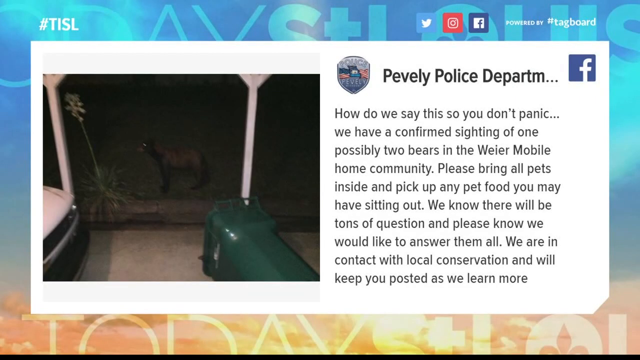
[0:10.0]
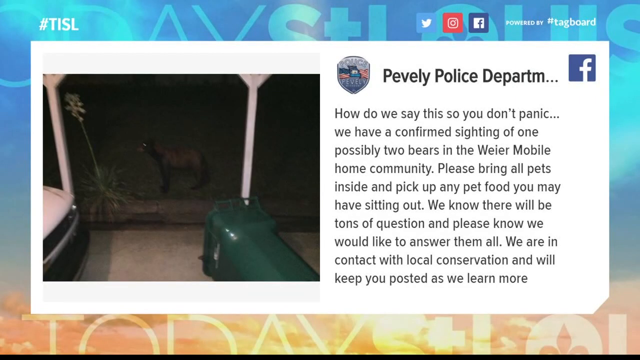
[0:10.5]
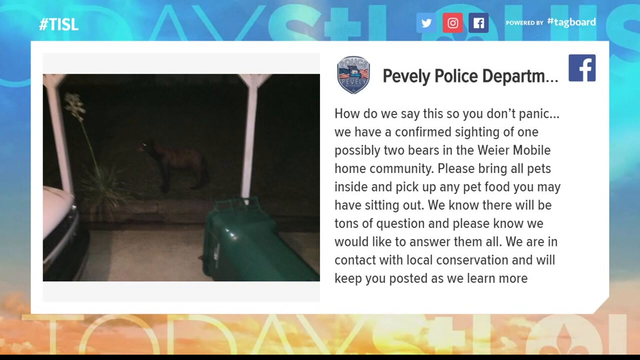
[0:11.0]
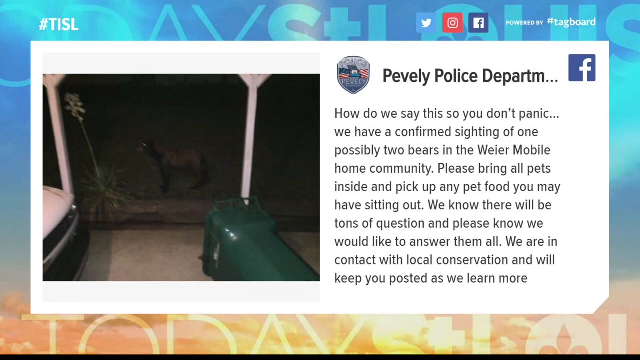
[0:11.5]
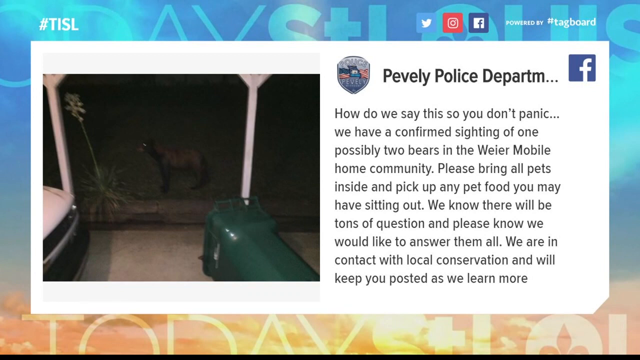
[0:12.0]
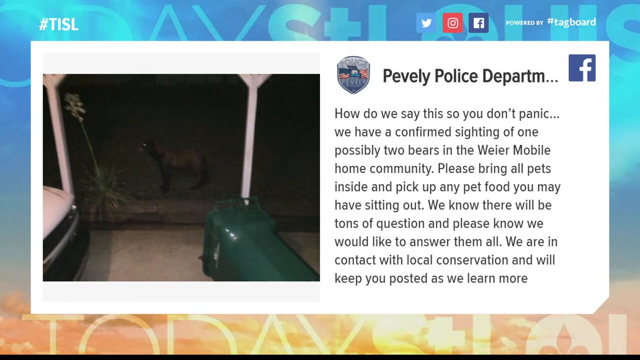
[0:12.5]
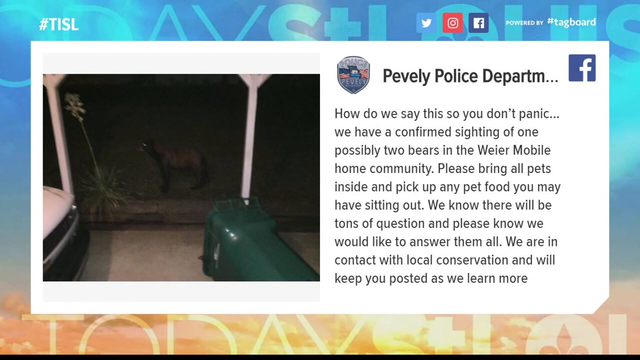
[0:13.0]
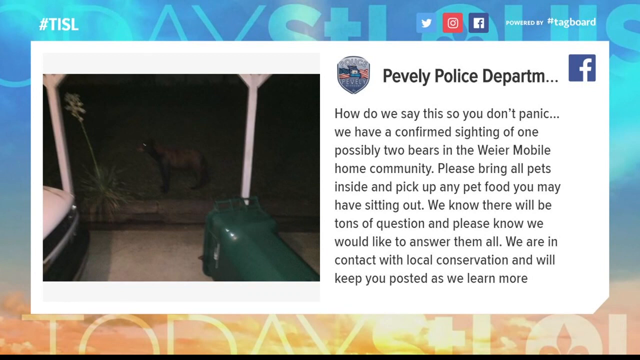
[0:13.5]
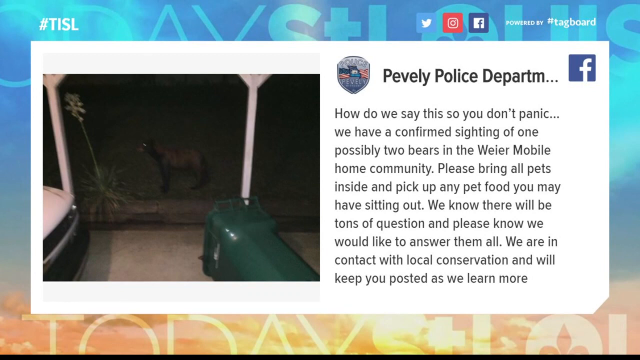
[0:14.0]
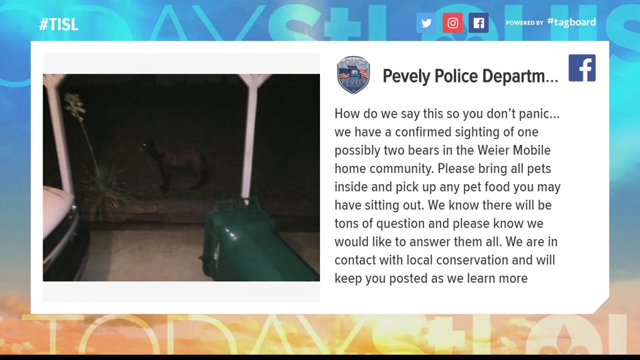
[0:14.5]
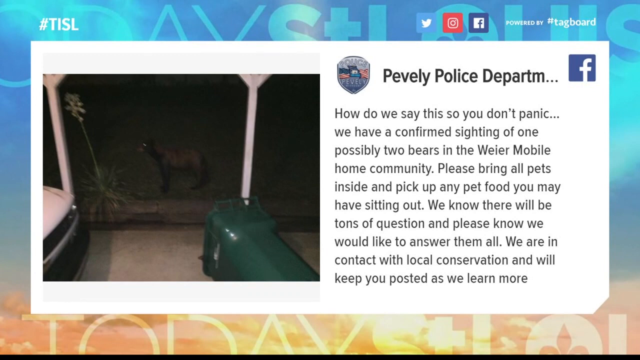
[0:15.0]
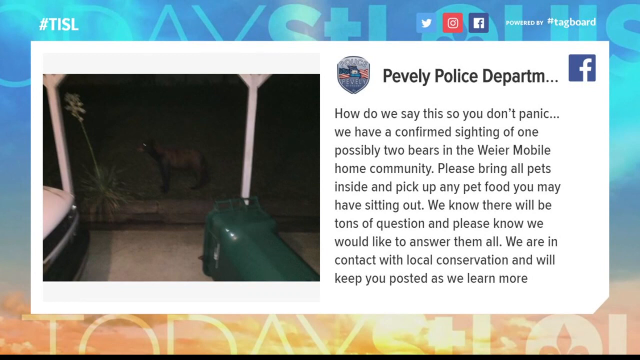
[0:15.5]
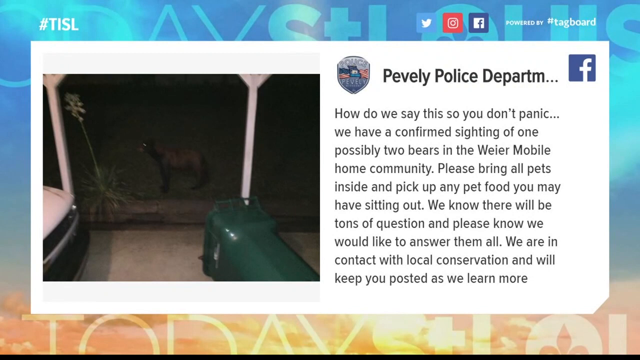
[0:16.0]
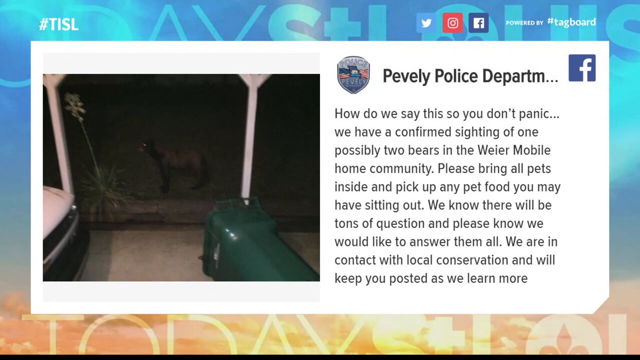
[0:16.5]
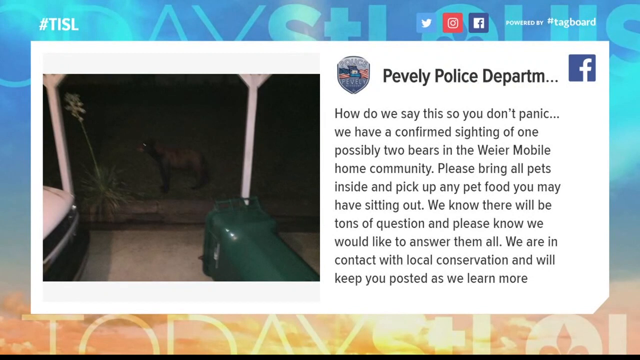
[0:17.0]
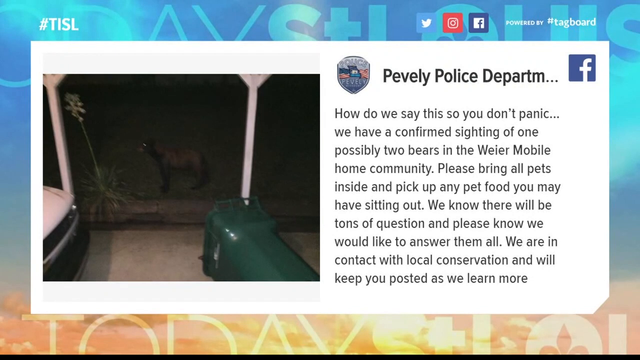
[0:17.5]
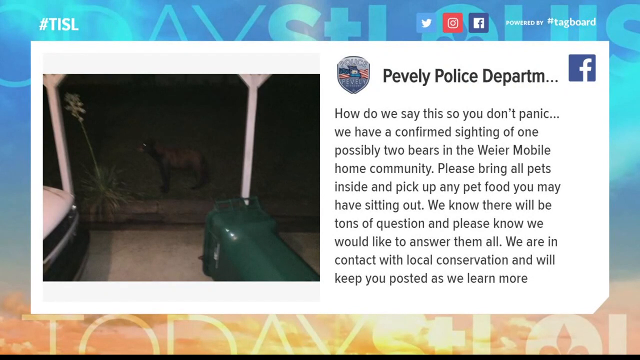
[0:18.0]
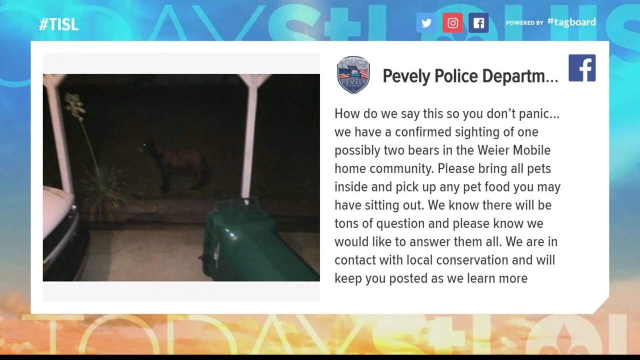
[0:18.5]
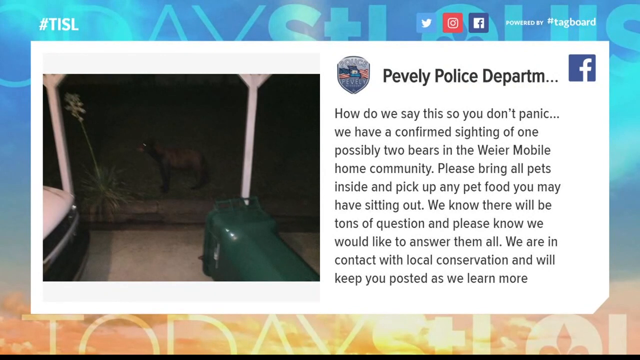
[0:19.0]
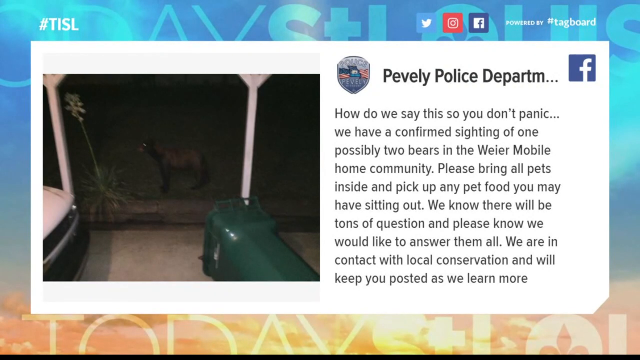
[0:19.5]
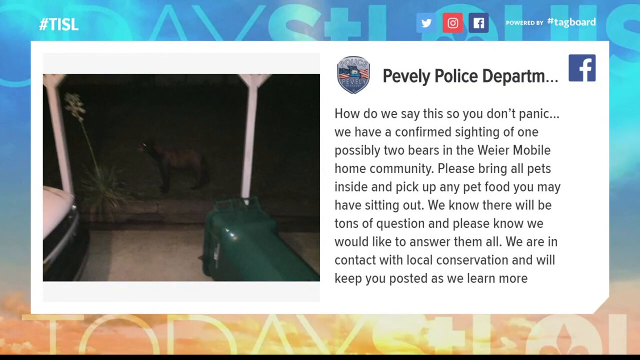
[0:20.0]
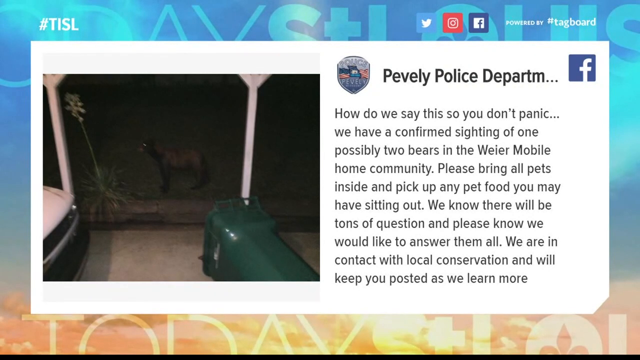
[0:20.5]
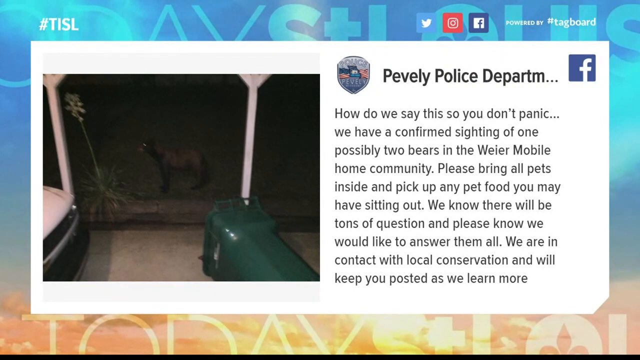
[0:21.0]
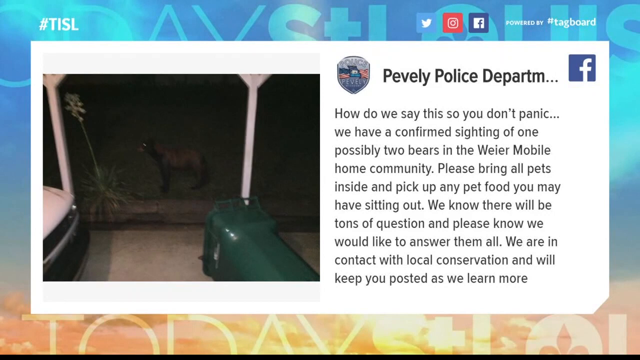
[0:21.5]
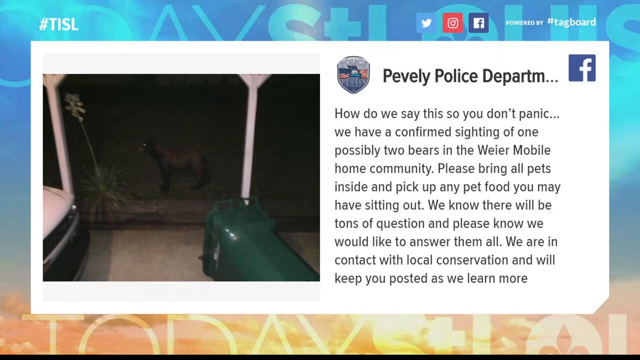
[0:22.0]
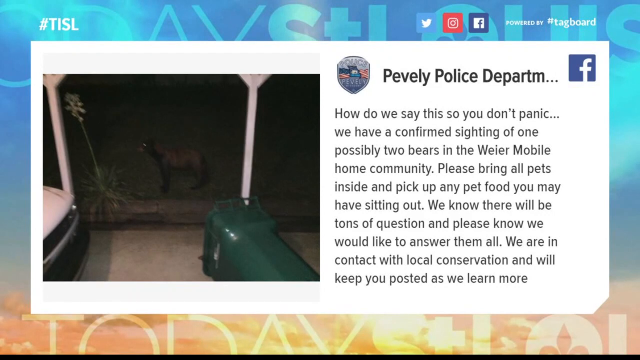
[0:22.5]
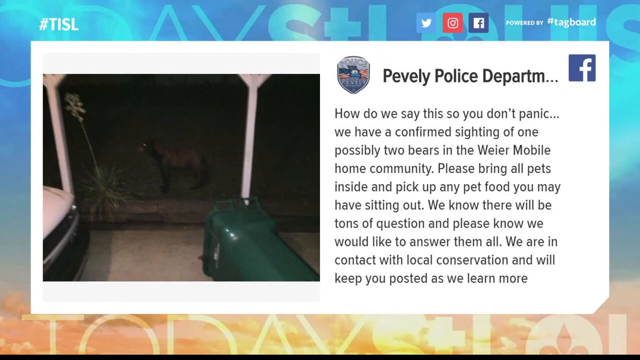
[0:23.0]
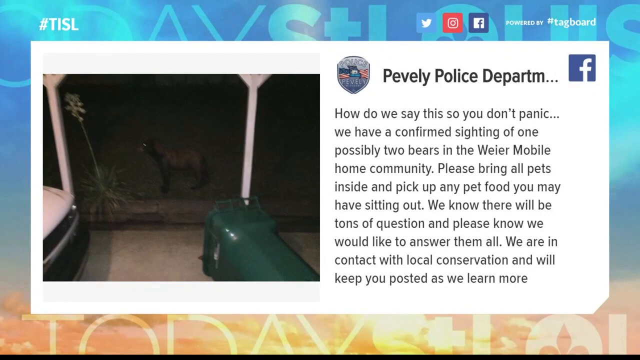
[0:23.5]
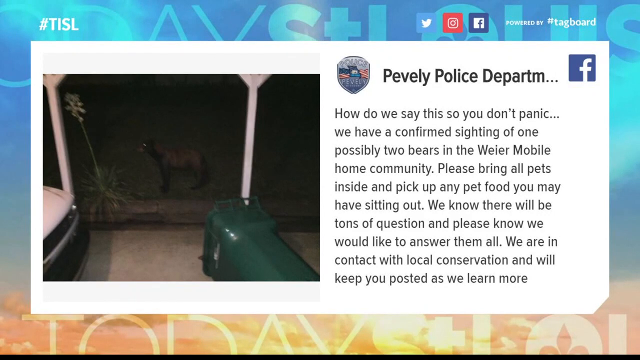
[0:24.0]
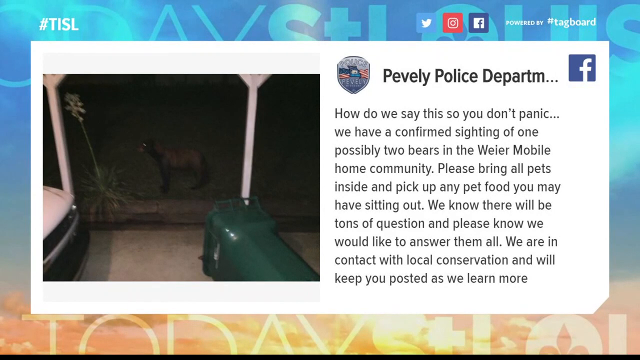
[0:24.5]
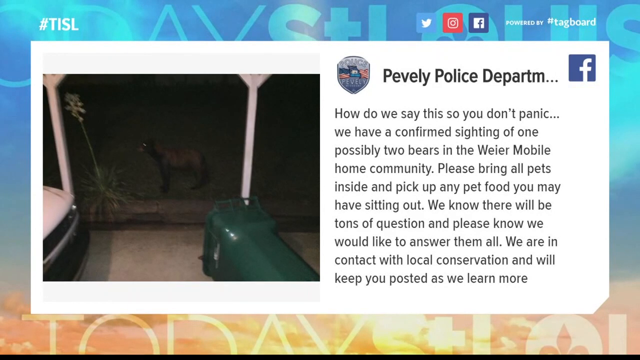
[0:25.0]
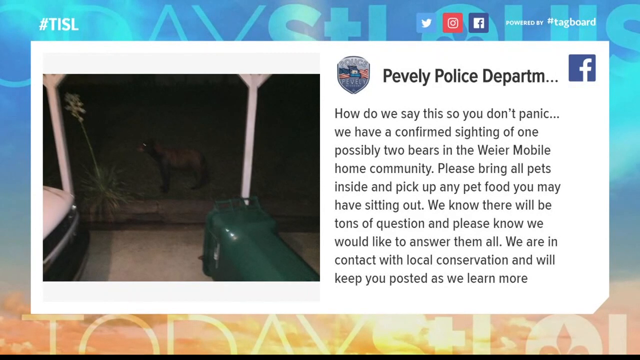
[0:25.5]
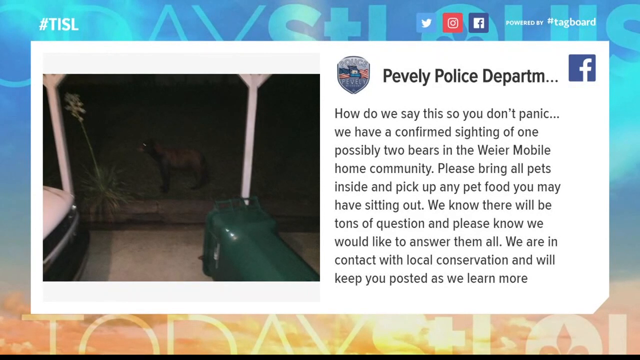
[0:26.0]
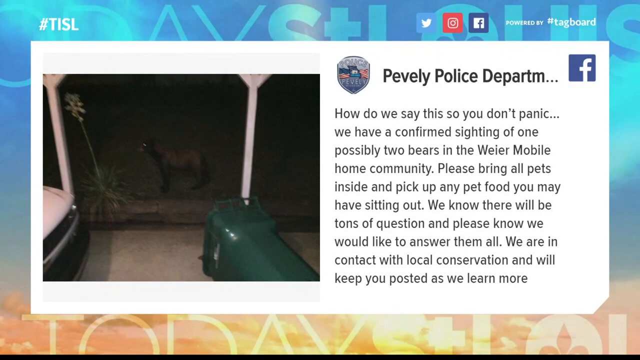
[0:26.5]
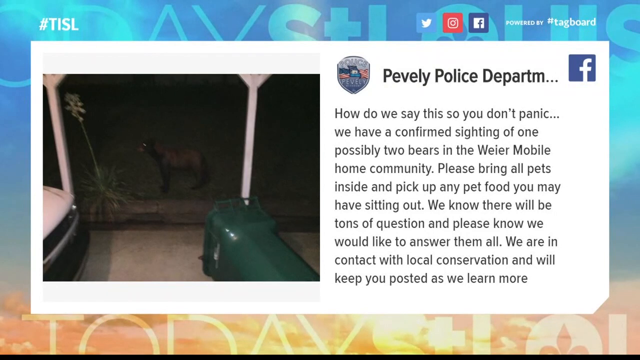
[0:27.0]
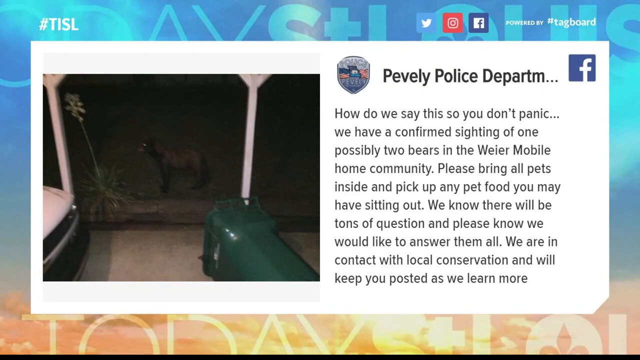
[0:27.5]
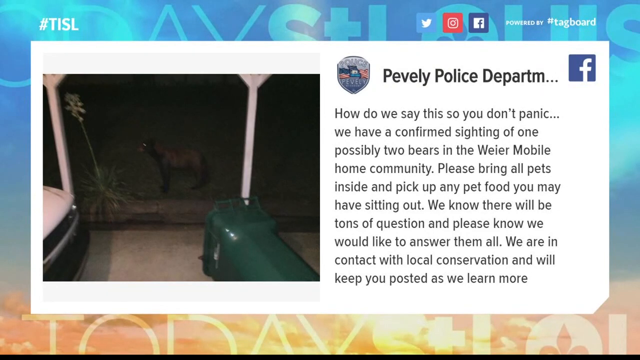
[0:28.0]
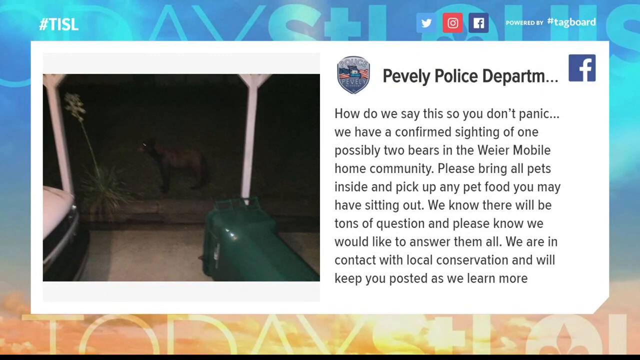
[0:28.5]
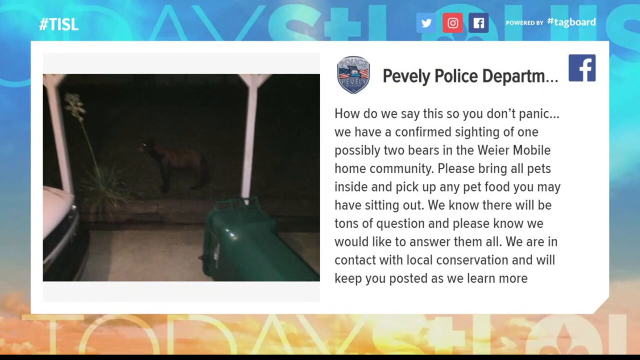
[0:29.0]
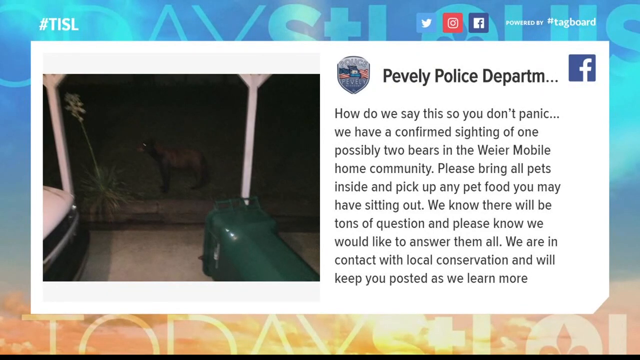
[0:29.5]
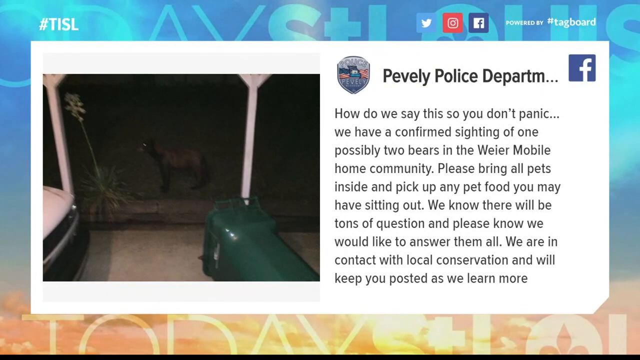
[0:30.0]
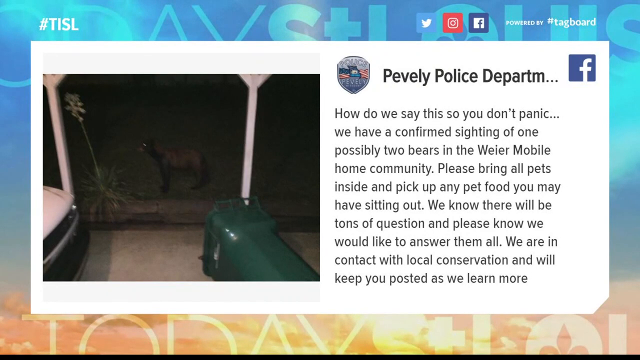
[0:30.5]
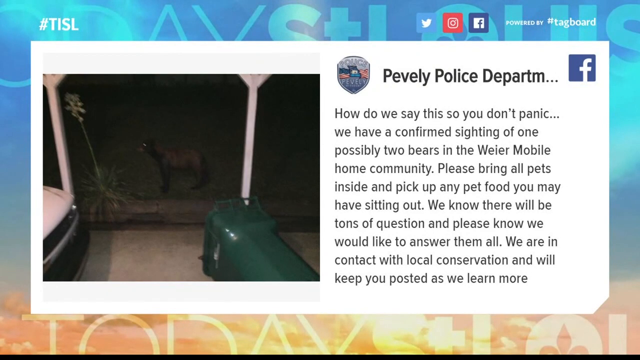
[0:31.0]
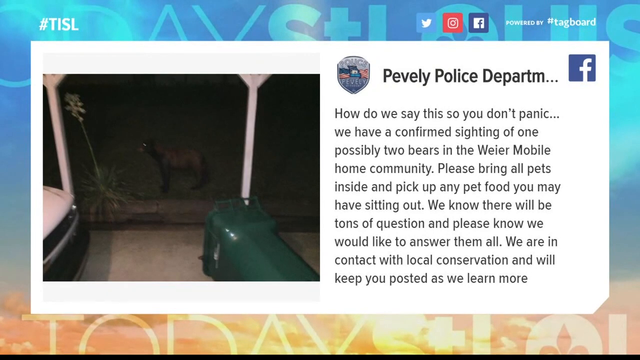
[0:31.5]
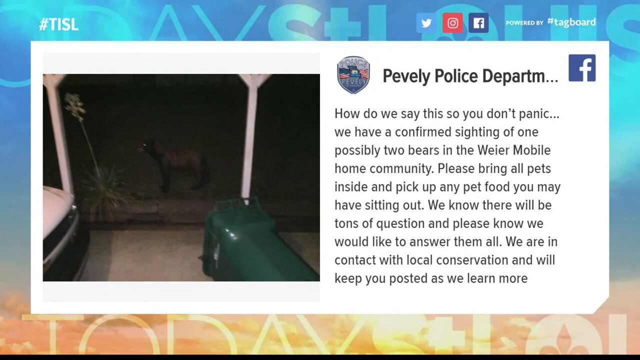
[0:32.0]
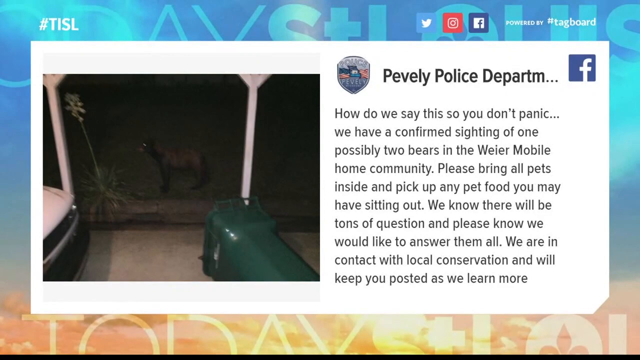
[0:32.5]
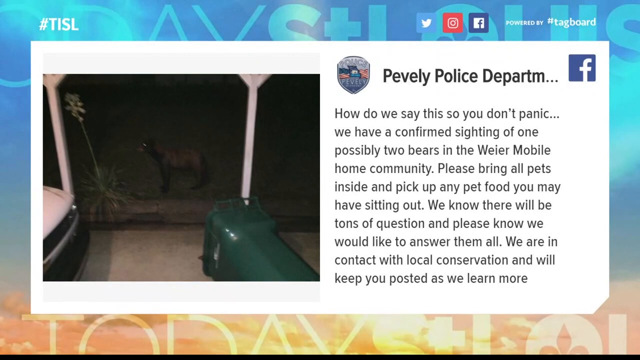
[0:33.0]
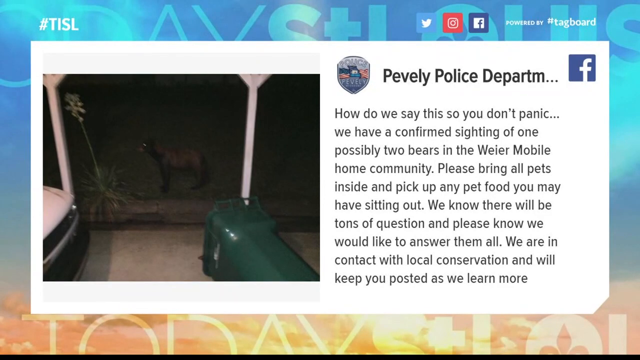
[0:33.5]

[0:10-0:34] An image shows a trash can toppled over on what looks like a cement surface, with a bear a little farther back in the background. The scene is in low light and the animal's eyes are glowing. On the left of the image is what looks like the front end of a white pickup truck. To the right of the image is black text that says: "Peveley Police Department. How do we say this so you don't panic? We have confirmed sighting of possibly two bears in the WEIER mobile home community, please bring all pets inside and pick up any pet food you may have sitting out. We know there will be tons of questions and please know we would like to answer them all. We are in contact with local conservation and we'll keep you posted as we learn more."